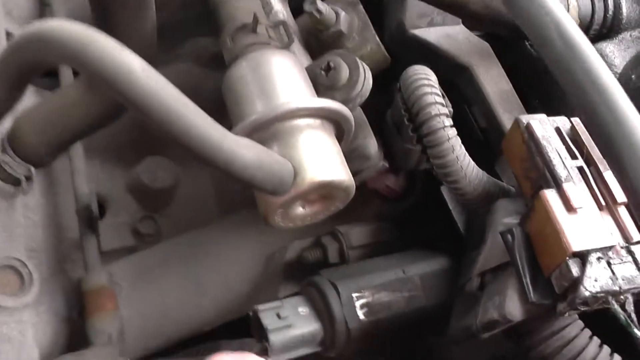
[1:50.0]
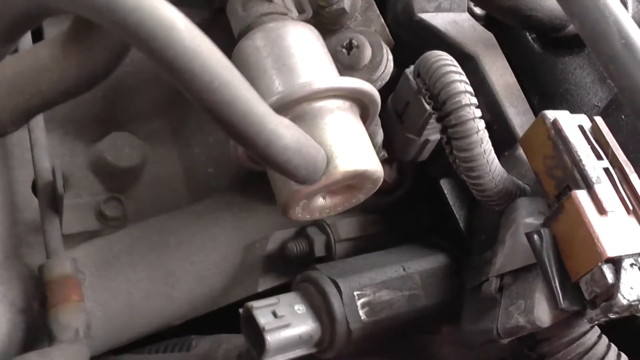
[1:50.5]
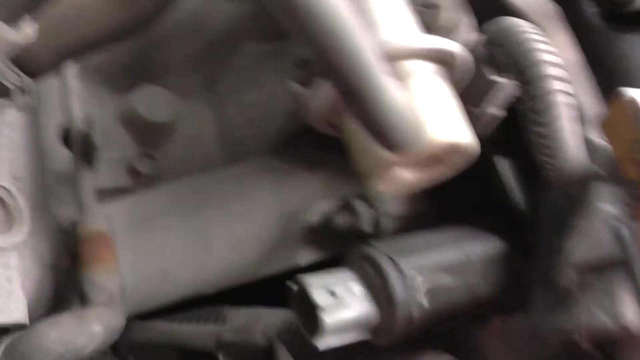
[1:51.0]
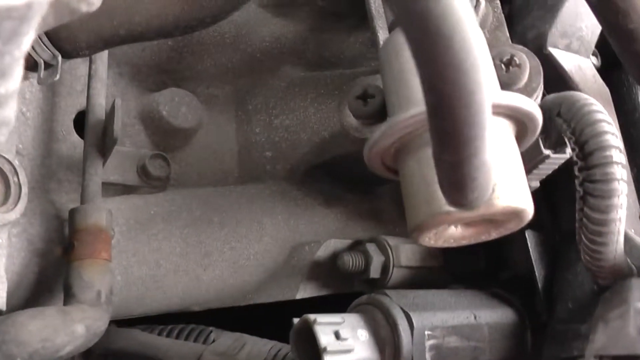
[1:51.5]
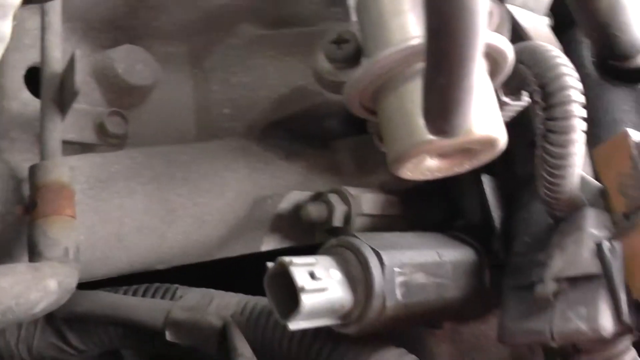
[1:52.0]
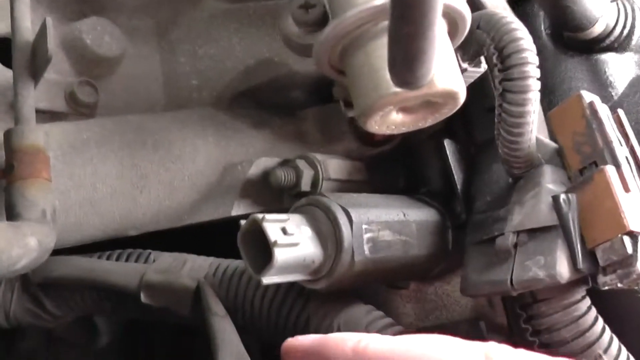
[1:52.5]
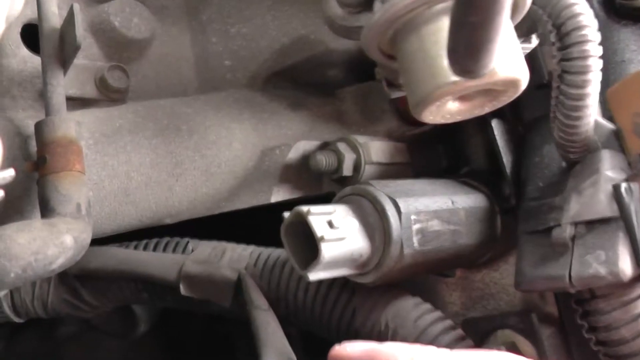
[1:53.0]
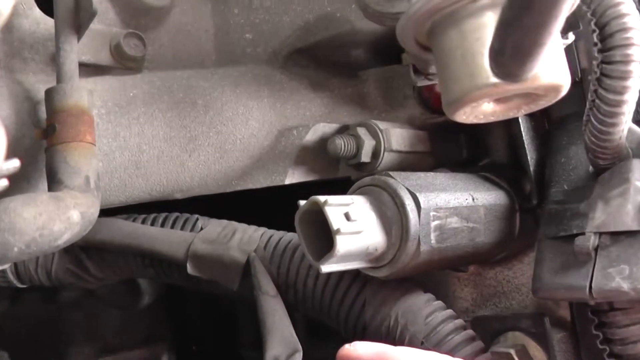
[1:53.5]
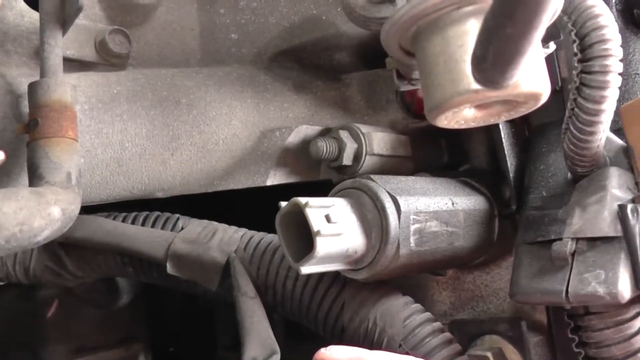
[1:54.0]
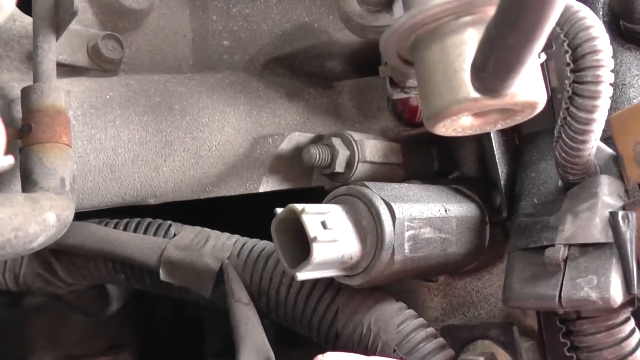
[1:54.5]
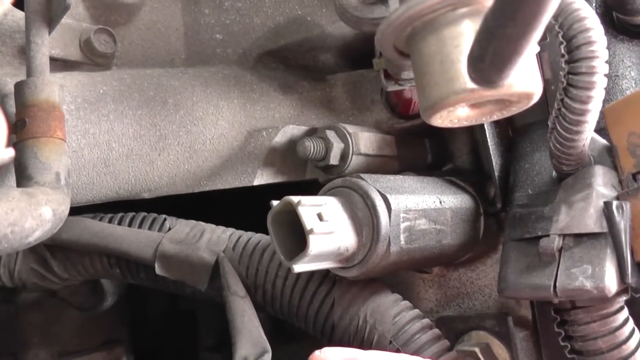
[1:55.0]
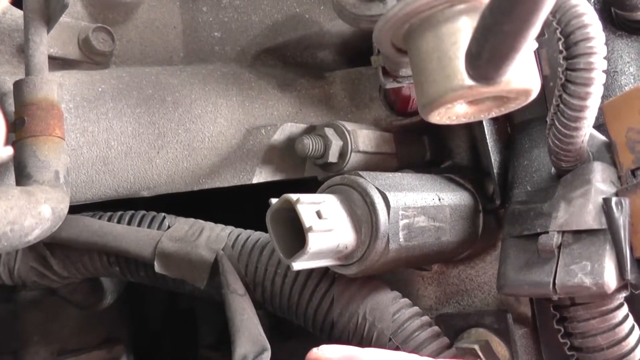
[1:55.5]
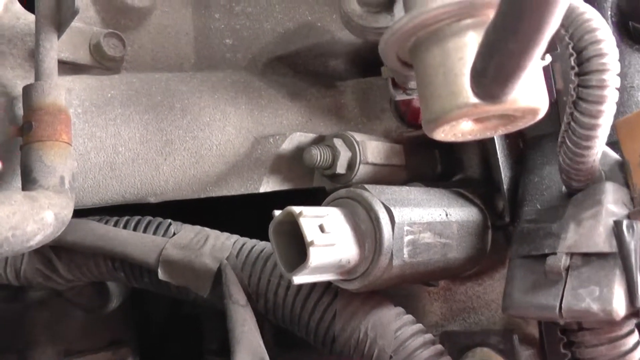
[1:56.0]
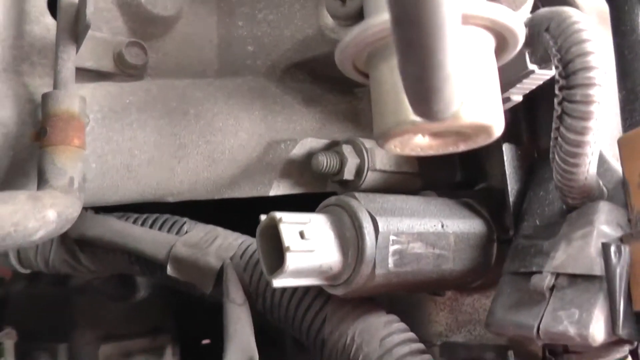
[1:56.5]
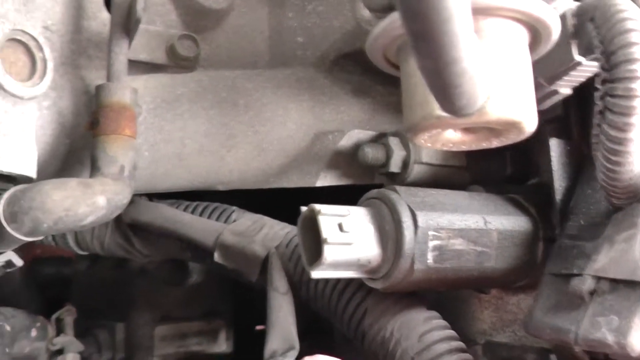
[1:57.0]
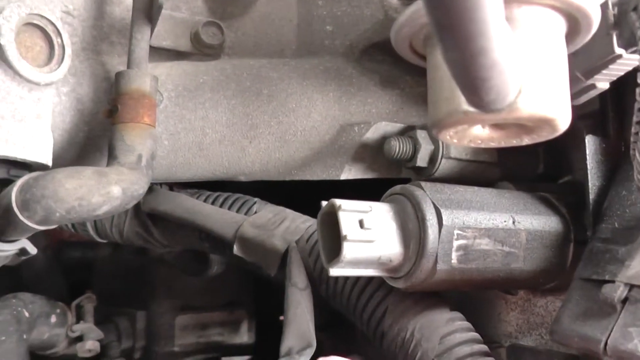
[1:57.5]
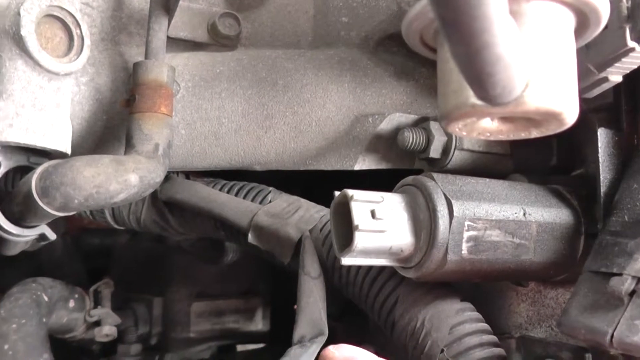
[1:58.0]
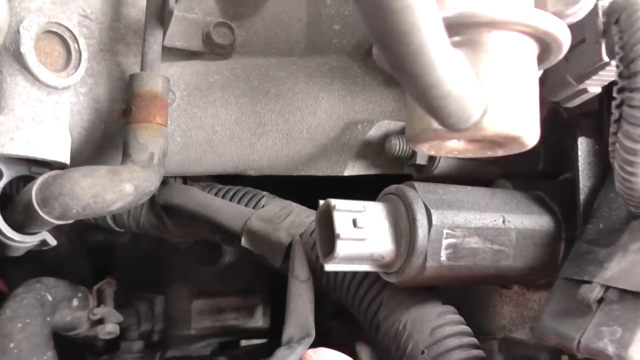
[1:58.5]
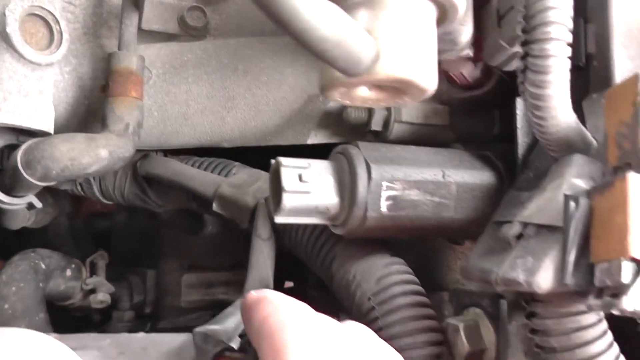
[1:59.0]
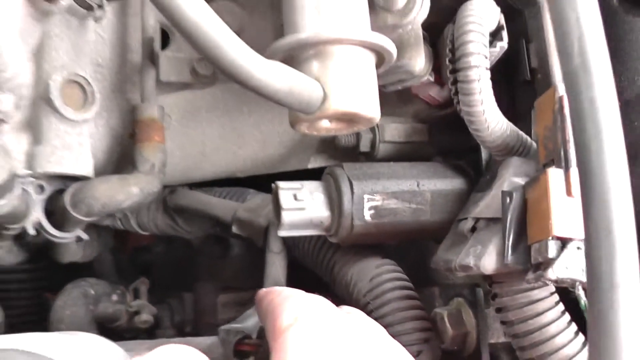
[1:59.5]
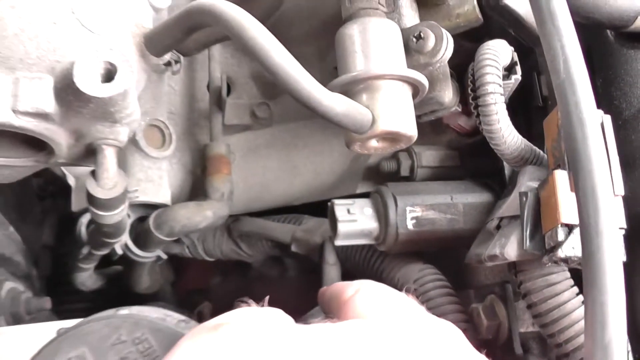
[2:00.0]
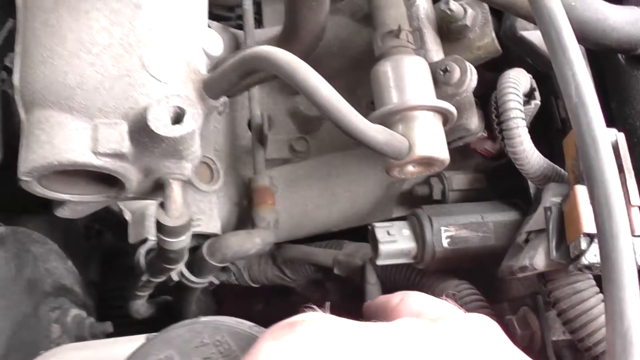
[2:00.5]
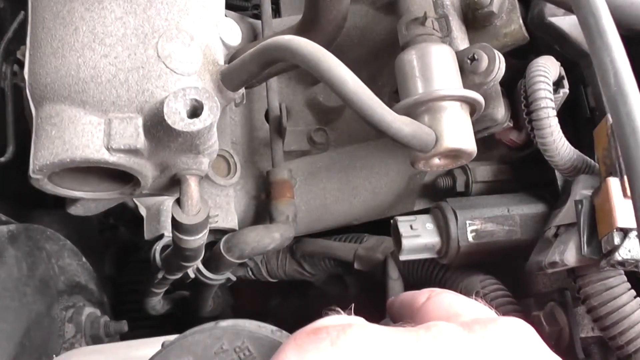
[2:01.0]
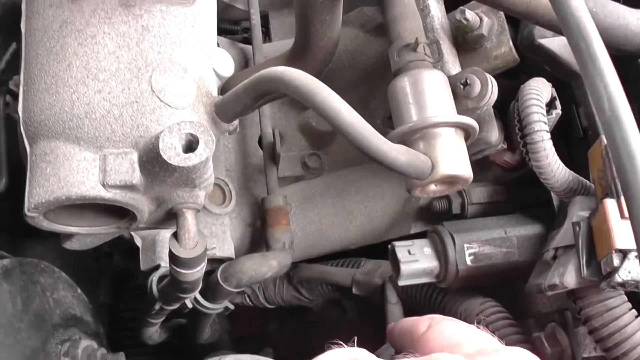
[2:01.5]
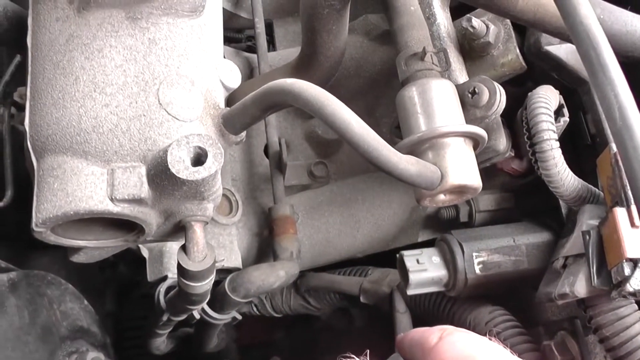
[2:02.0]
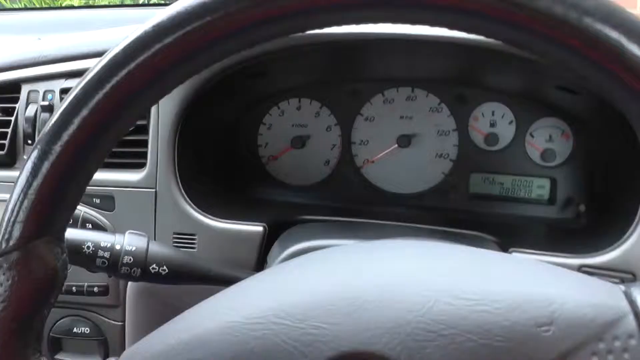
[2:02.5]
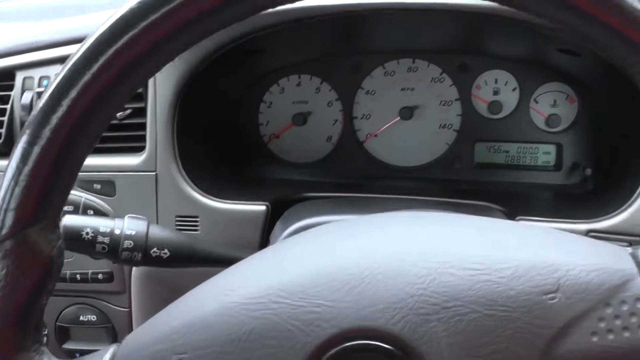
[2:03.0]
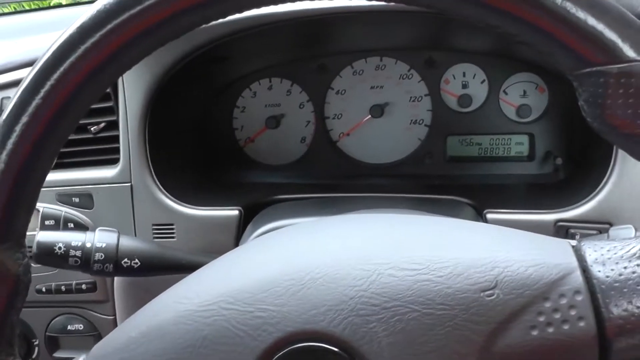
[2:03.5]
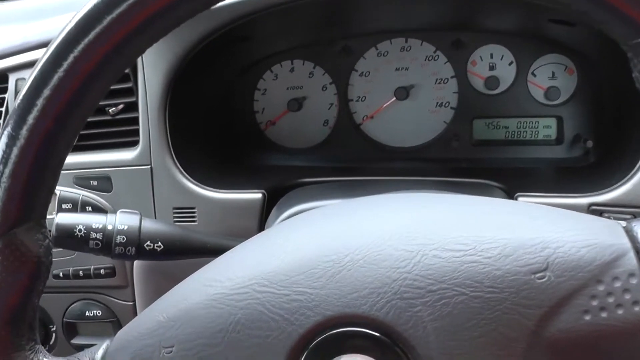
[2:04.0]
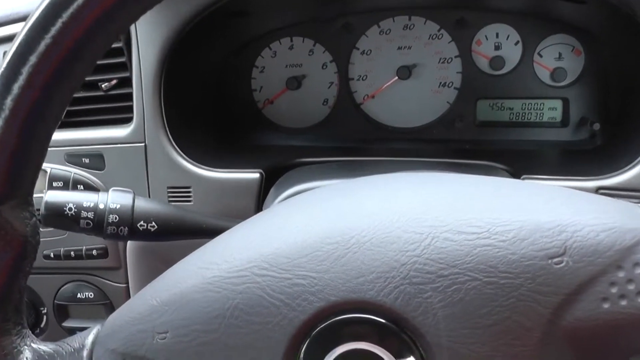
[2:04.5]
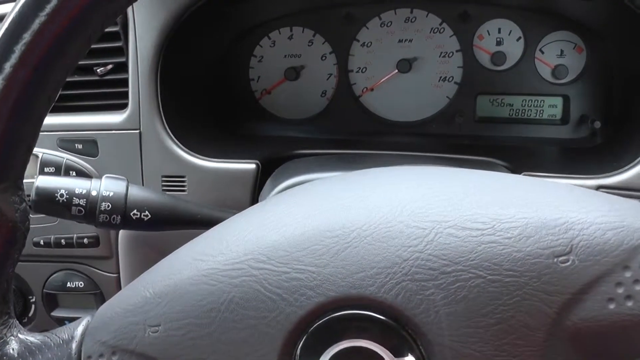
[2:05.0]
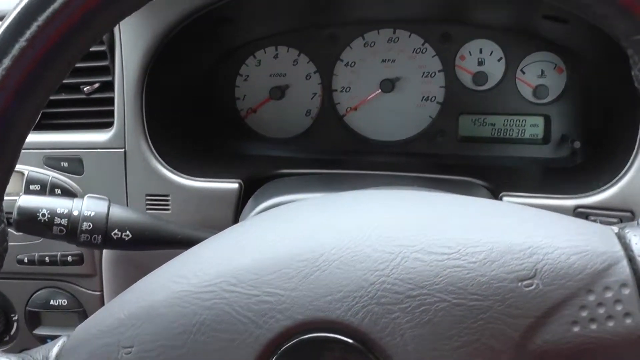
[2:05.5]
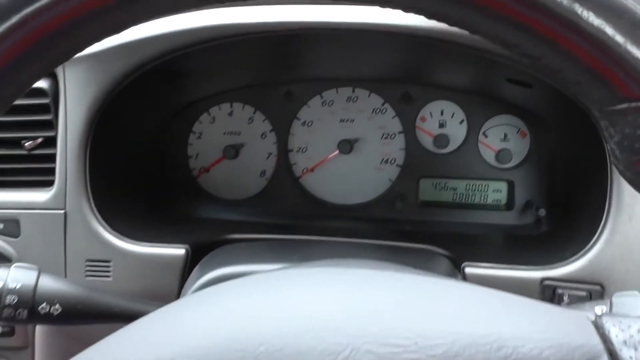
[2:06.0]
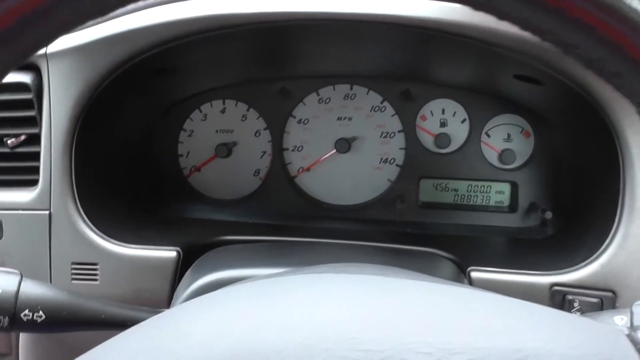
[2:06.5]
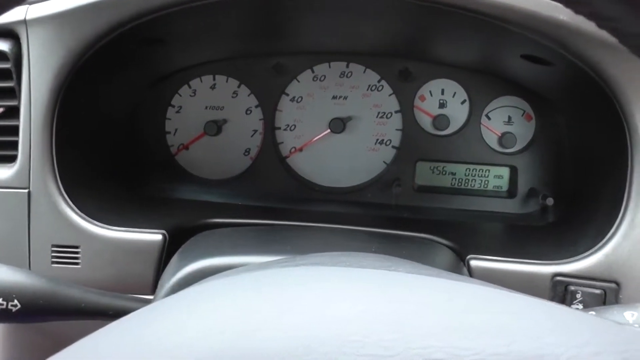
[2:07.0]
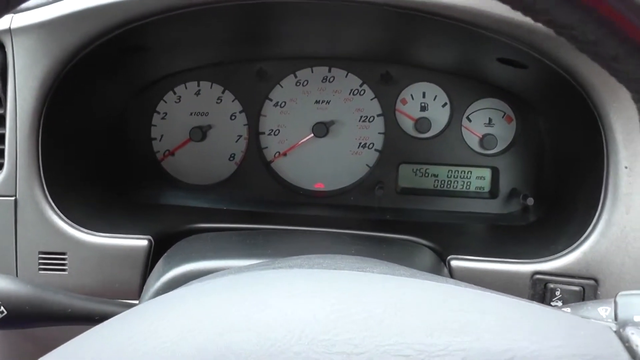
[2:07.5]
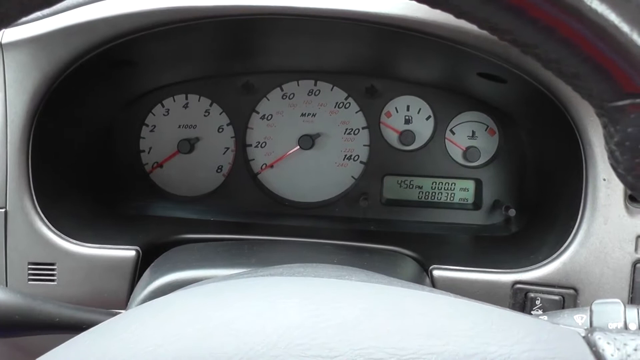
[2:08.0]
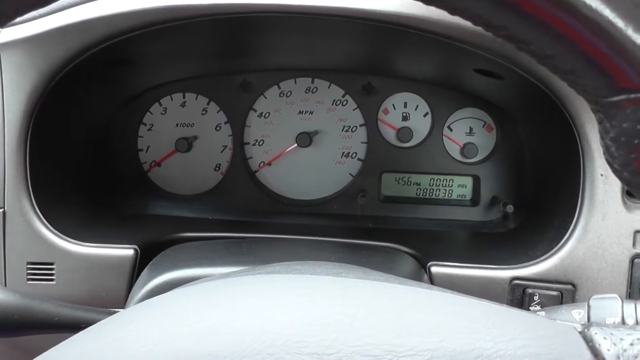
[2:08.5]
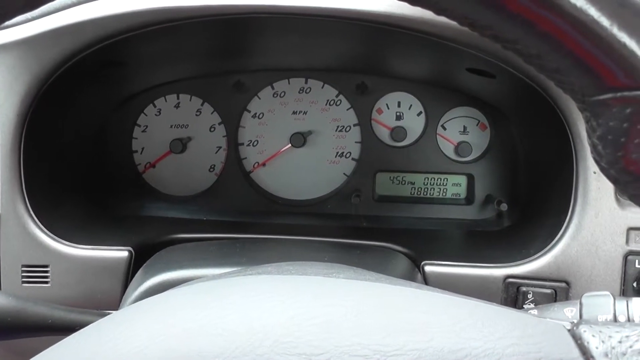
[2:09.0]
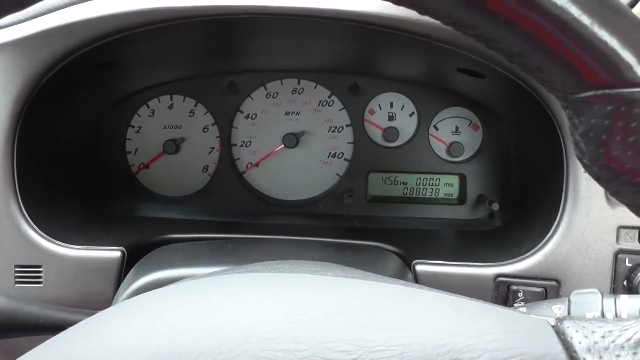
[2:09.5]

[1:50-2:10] The view stays under the hood among the various parts and hoses. The camera moves around, giving a close-up of the solenoid: its body is black, and its tip appears to be gray and made of plastic, a square gray plastic piece attached to the base of the solenoid. Hoses and other parts connected to the hood are visible. The mechanic's right hand enters from the bottom of the screen and points at a tube connected to a black ribbed hose up underneath the solenoid valve.